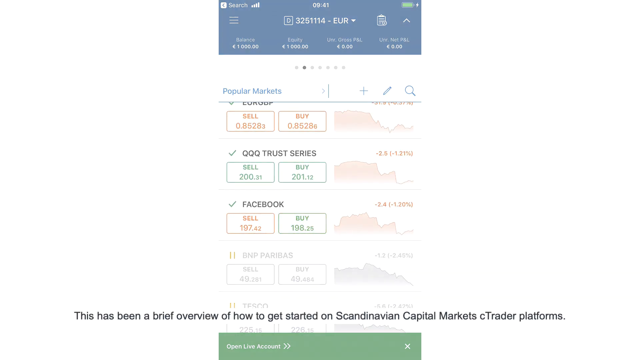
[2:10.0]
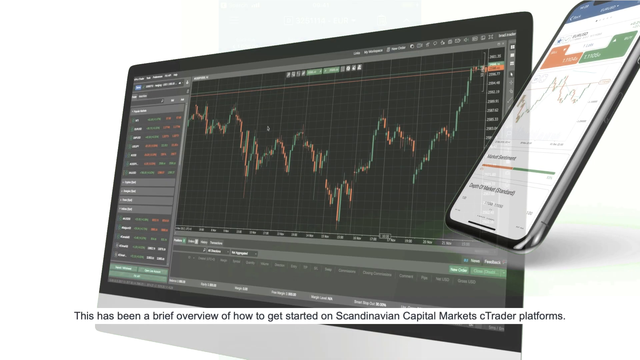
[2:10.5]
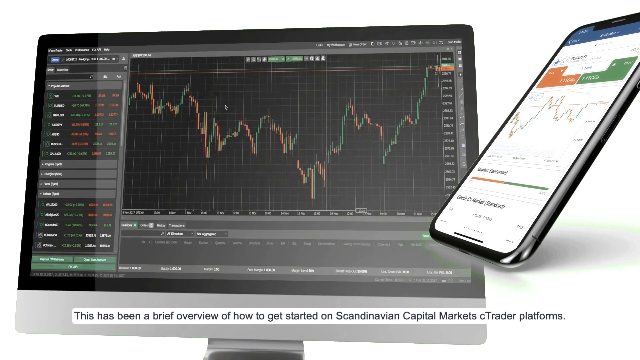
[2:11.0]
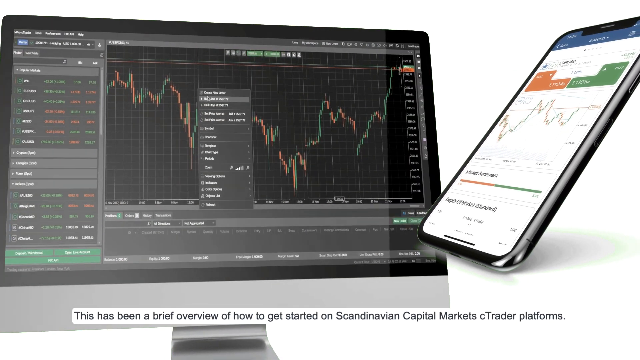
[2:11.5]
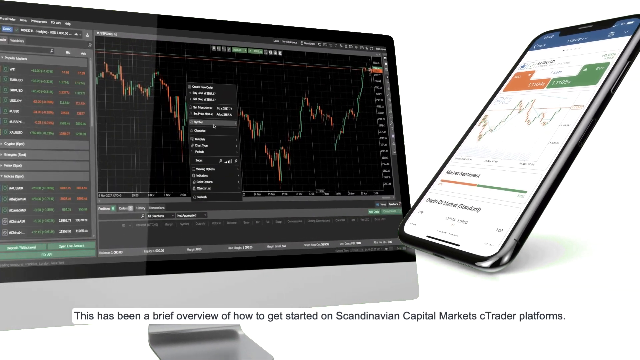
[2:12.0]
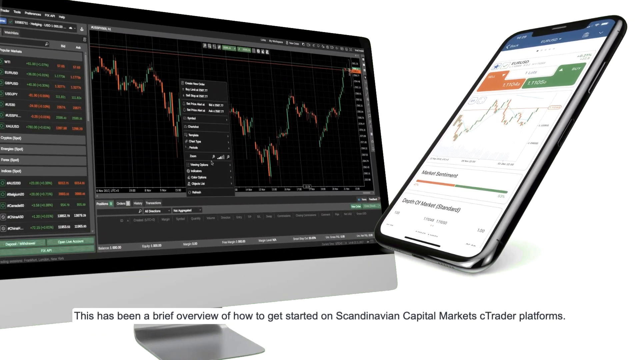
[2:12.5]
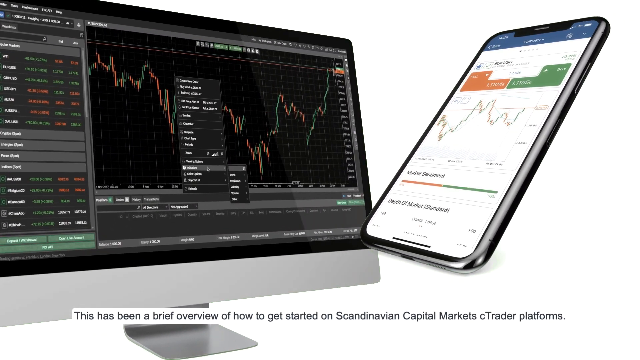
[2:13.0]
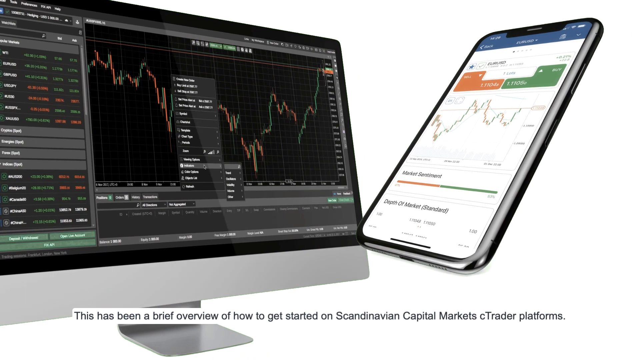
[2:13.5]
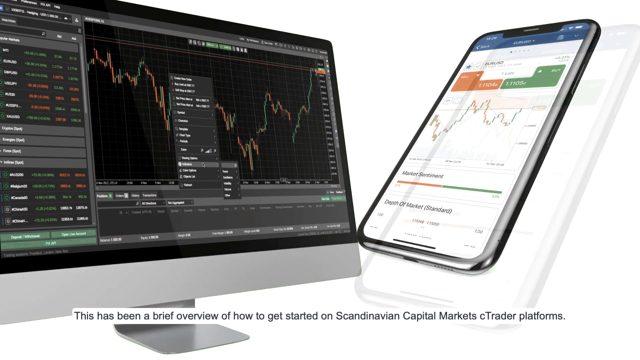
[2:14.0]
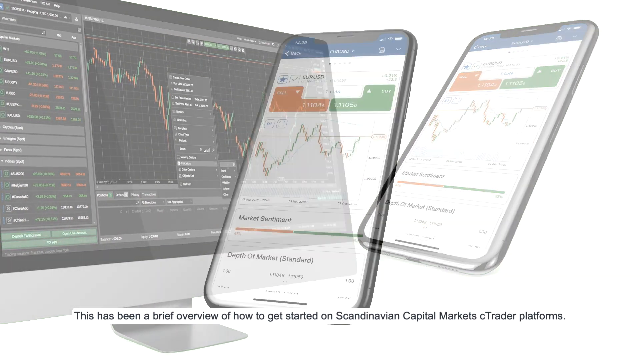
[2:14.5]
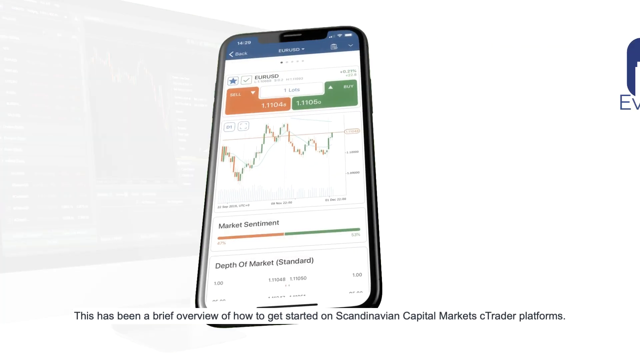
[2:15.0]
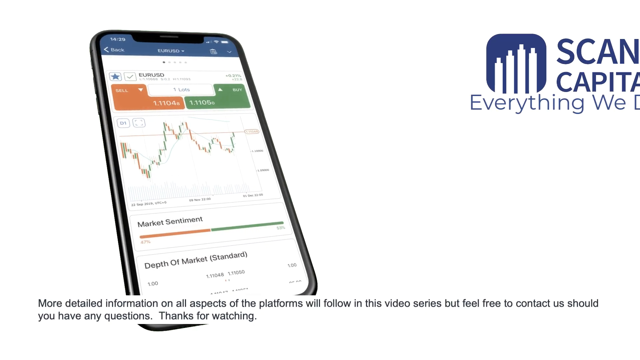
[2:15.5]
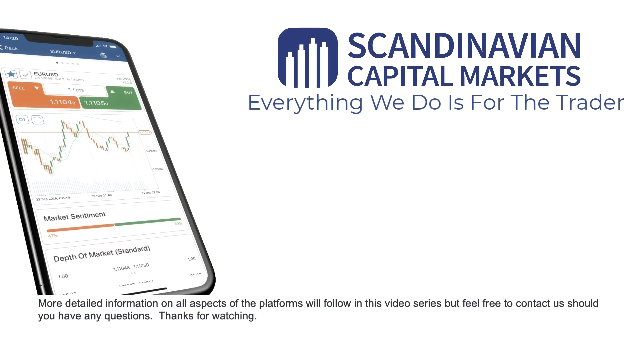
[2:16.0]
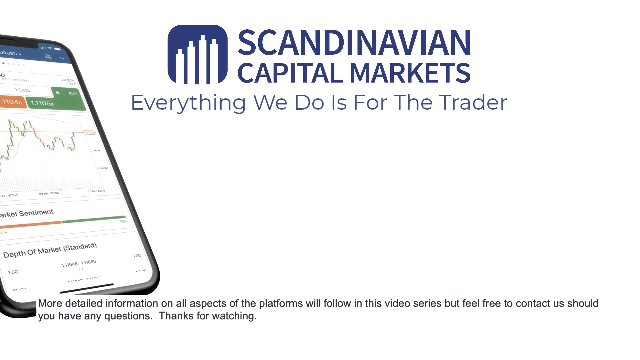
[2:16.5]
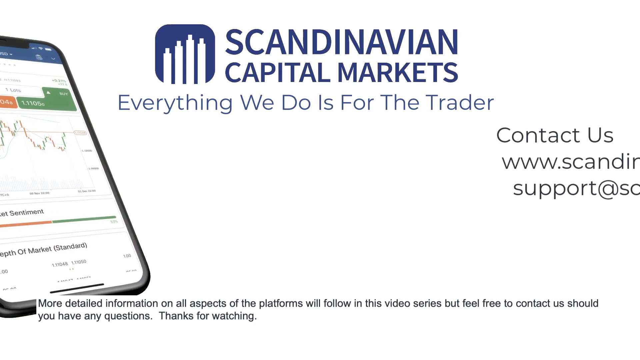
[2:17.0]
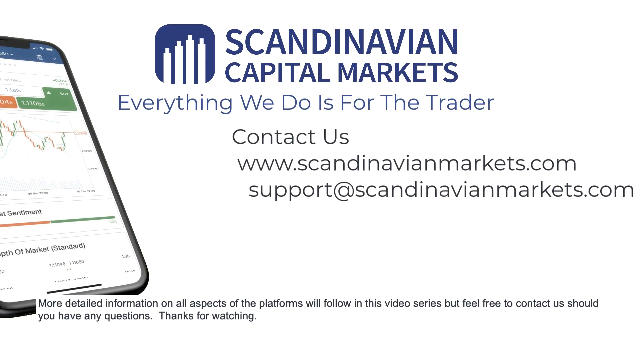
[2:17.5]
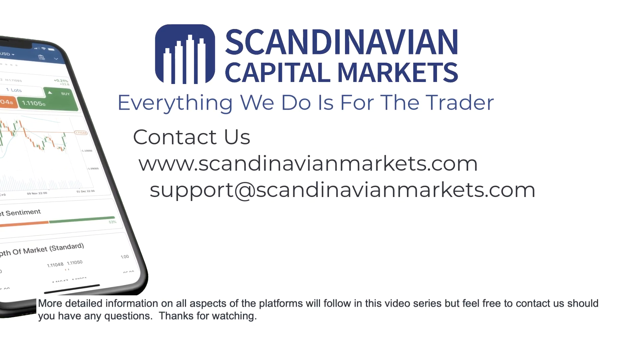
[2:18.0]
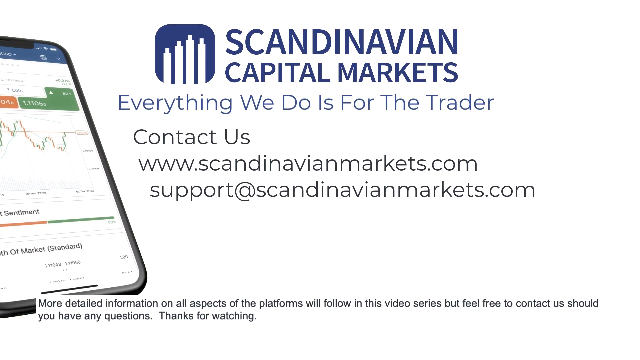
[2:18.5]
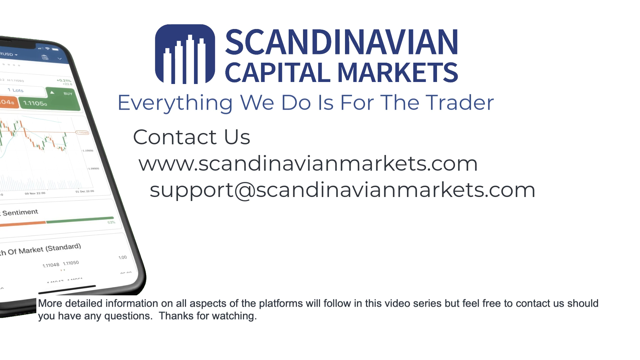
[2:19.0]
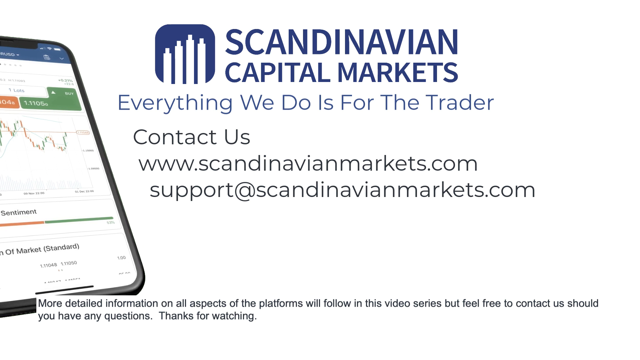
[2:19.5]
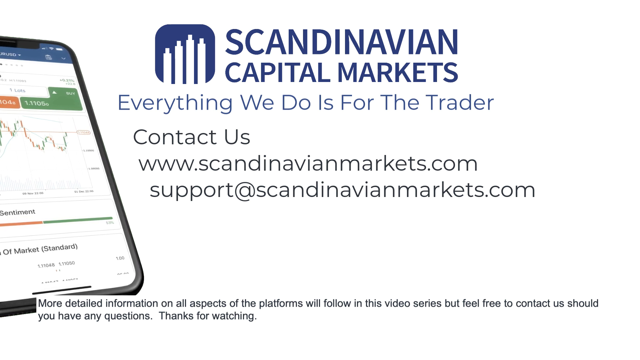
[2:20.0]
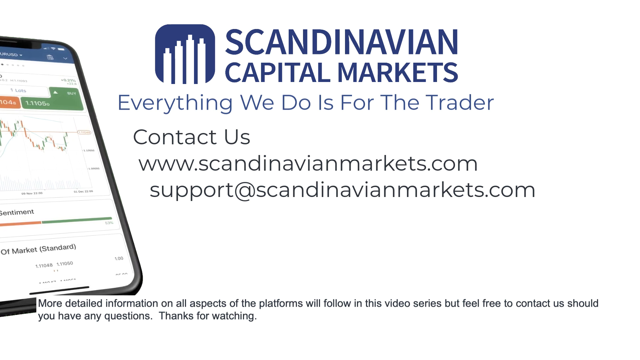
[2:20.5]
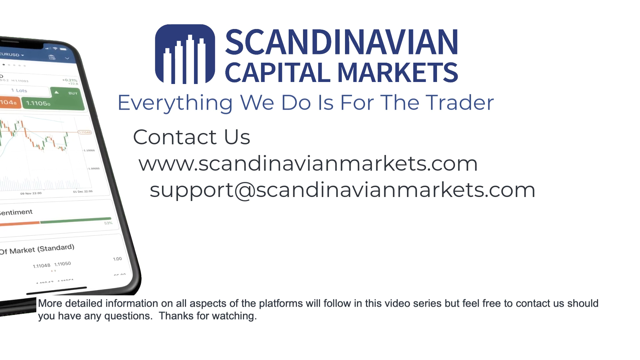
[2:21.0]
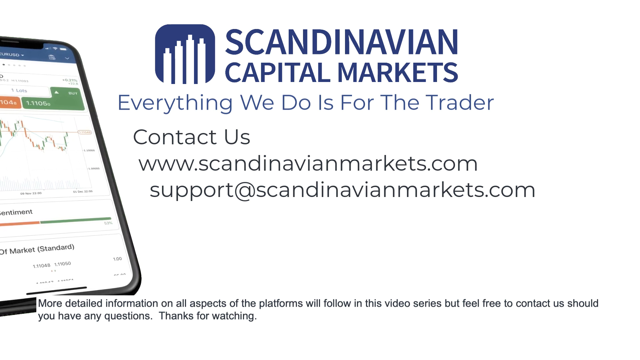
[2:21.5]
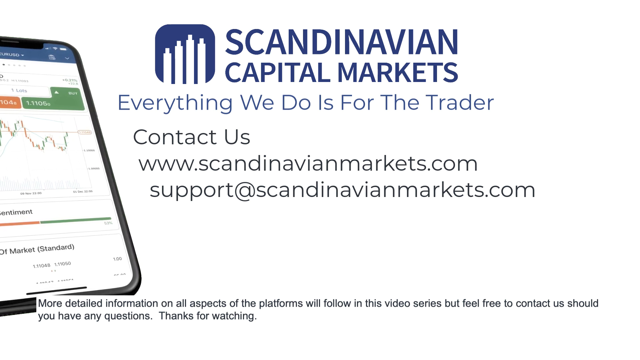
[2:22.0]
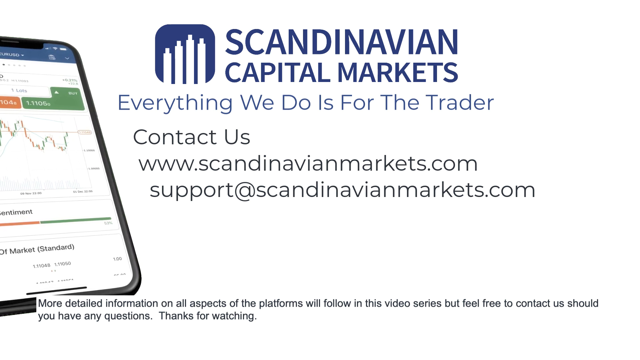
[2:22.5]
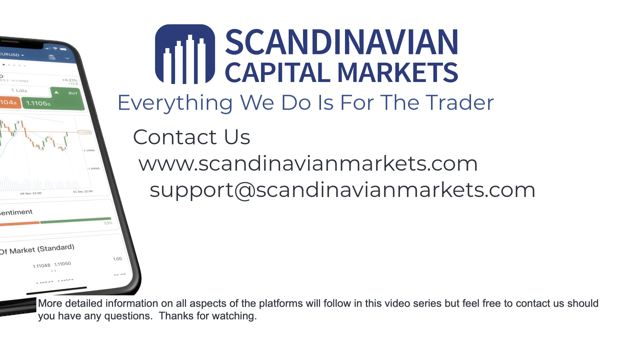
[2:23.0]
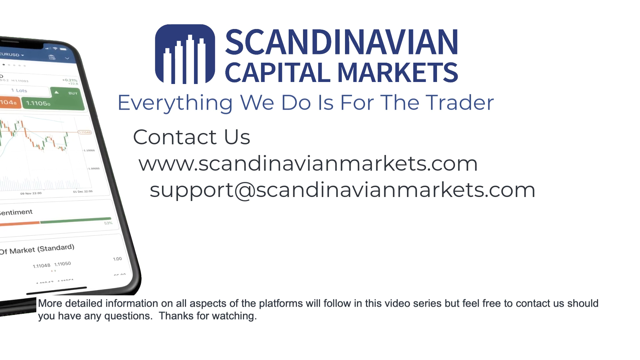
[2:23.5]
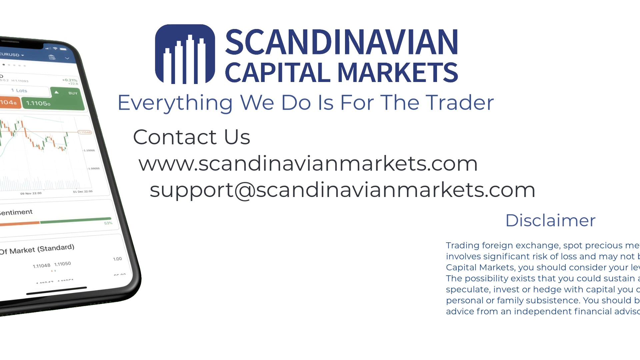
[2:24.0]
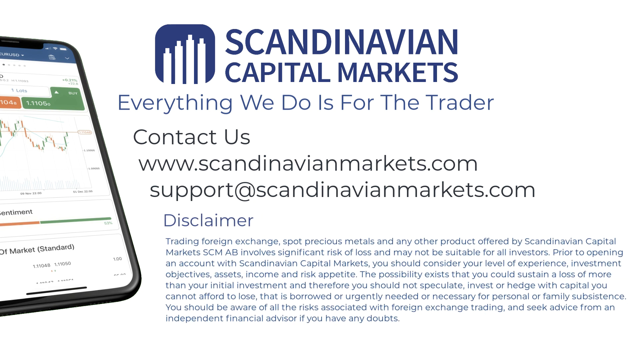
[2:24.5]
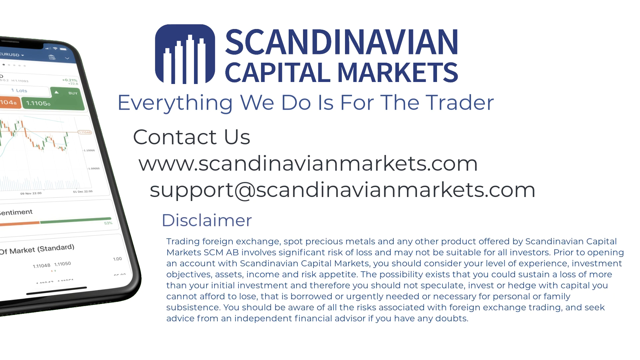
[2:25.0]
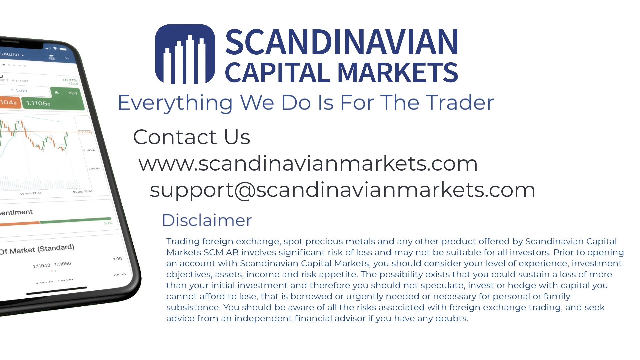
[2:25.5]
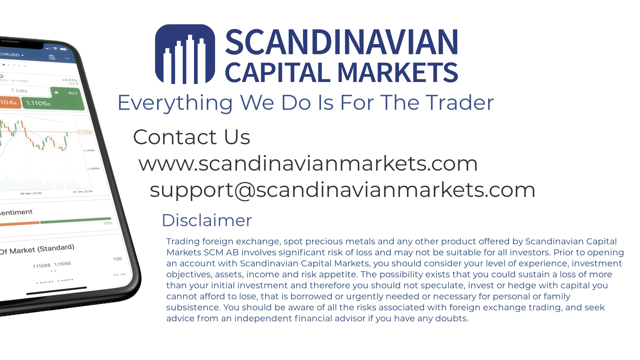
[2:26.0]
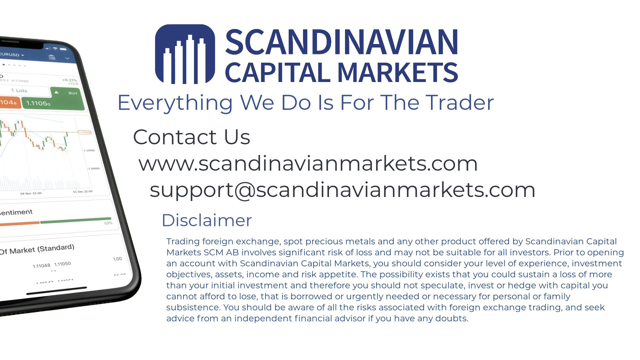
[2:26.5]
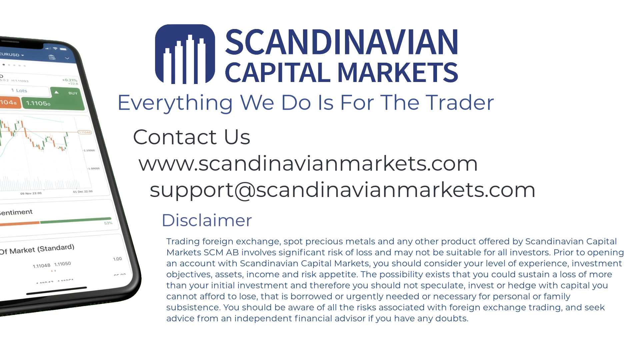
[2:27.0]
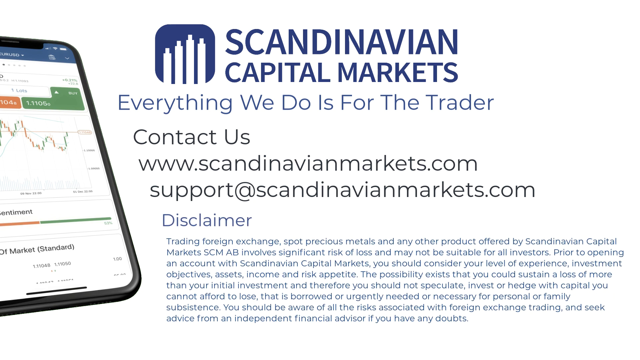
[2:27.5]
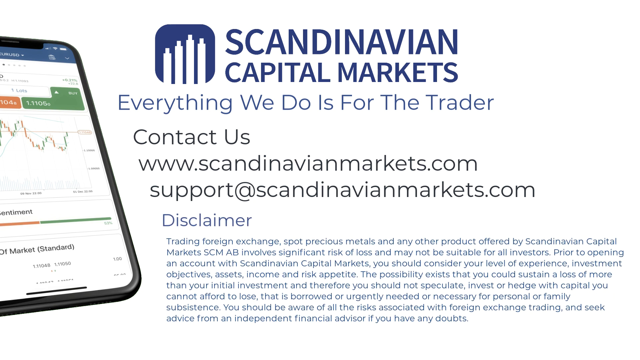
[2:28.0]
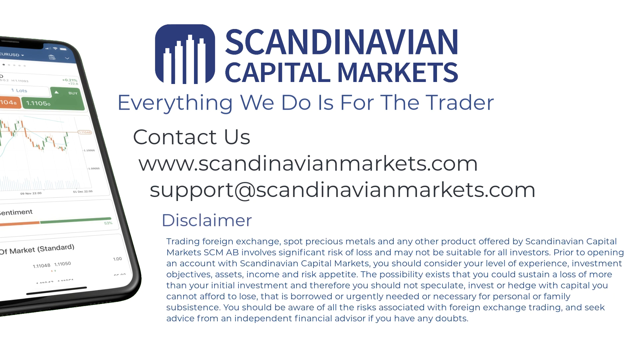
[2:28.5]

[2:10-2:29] The cell phone app page fades out to show a computer monitor and a cell phone moving into place. The monitor swivels to the left while the cell phone slowly falls and gently lands on the right side of the screen; both display the cTrader graphs and stocks. The page then fades to show the cell phone moving to the left, settling just slightly off screen with its upper right corner off screen. The Scandinavian capital market logo flies in from the right, with the words "everything we do is for the trader" below it in blue text. From the right, "contact us" appears in black and settles just under the catchphrase. Below that is the website "www.scandinavianmarkets.com," and below that "Support at Scandinavianmarkets.com." A disclaimer in blue text then flies in from the right and settles under all the other text. The page cuts to various charts and graphs of the Scandinavian Markets cTrader app.